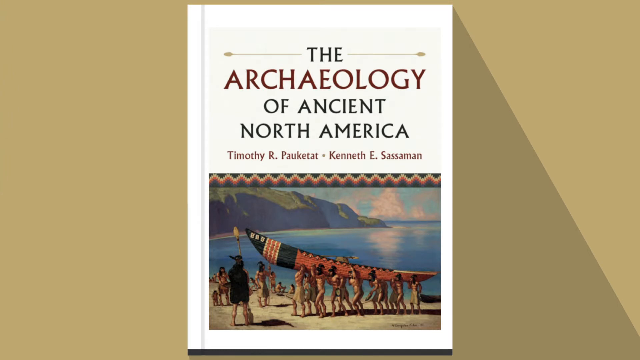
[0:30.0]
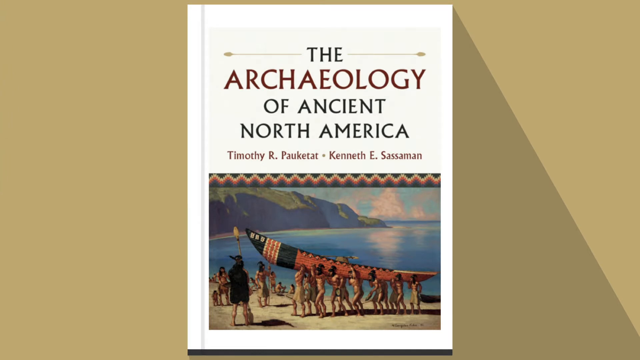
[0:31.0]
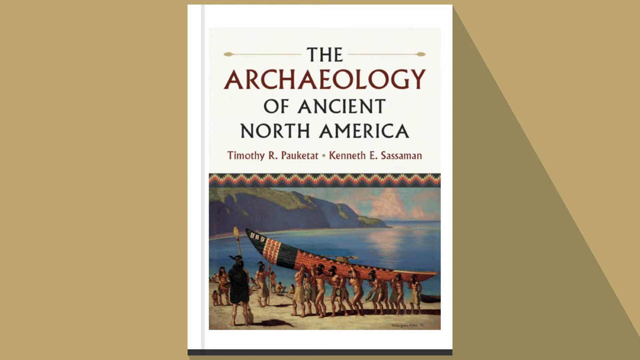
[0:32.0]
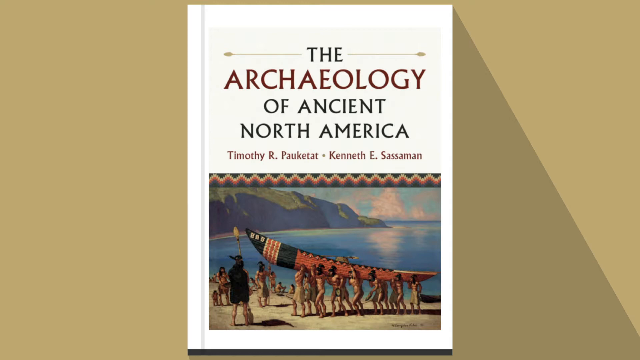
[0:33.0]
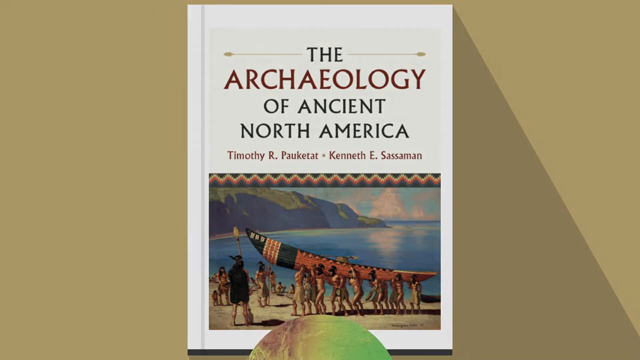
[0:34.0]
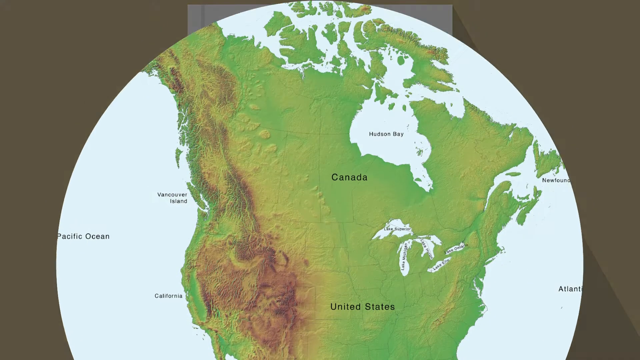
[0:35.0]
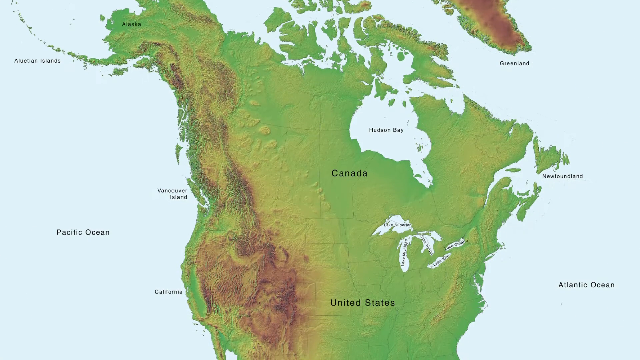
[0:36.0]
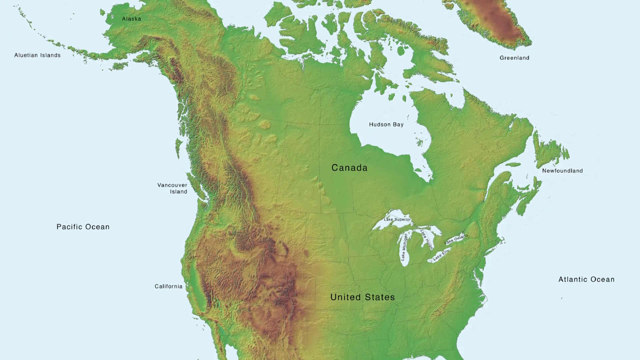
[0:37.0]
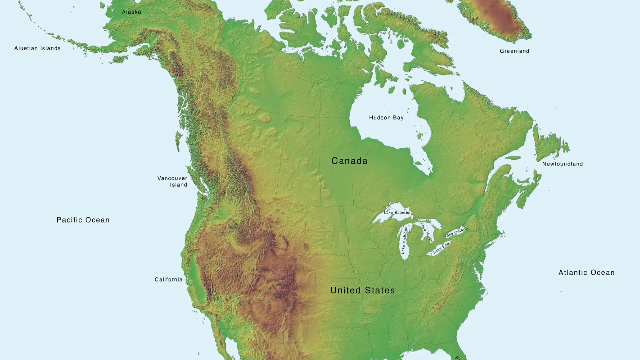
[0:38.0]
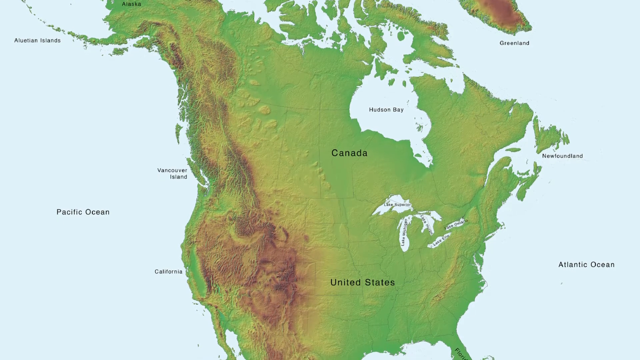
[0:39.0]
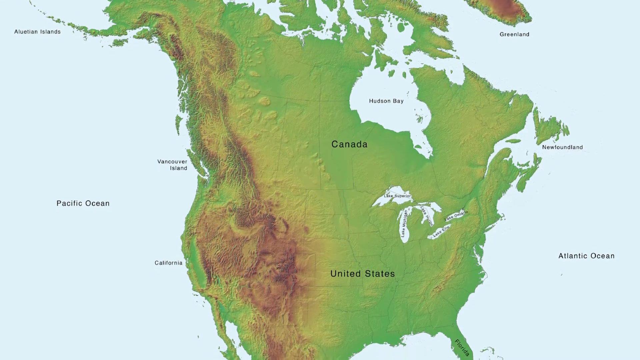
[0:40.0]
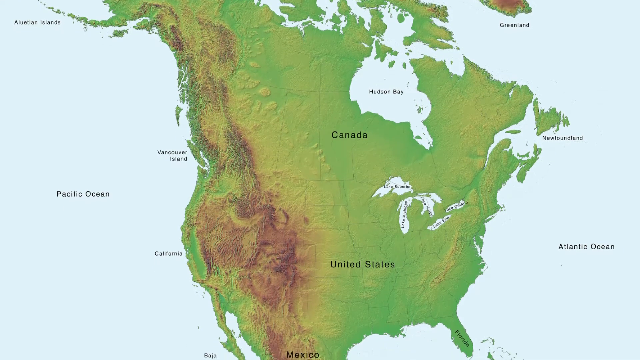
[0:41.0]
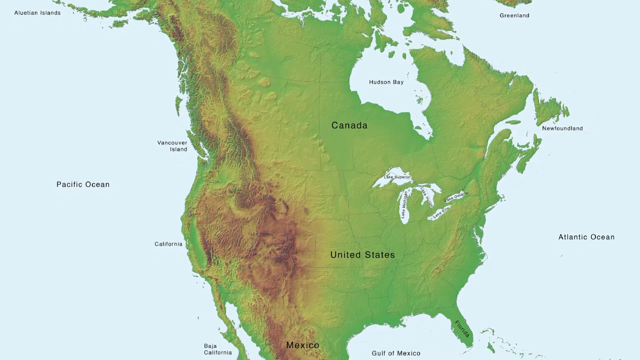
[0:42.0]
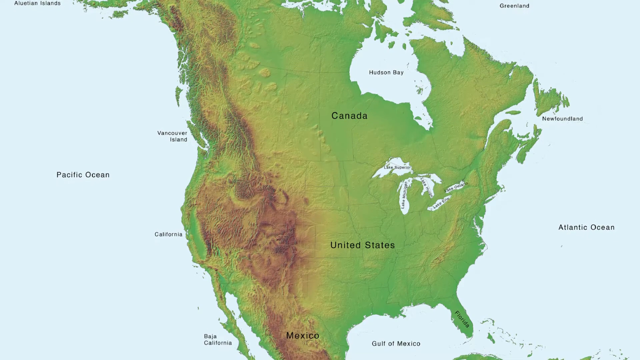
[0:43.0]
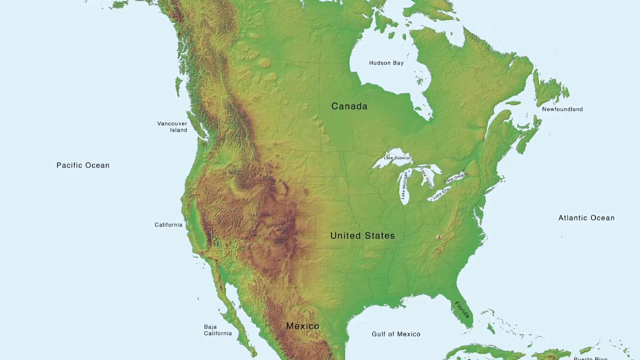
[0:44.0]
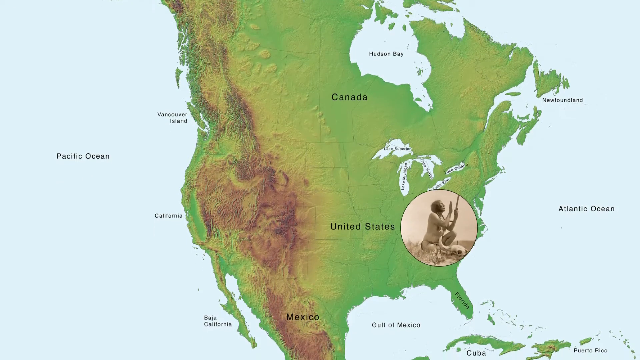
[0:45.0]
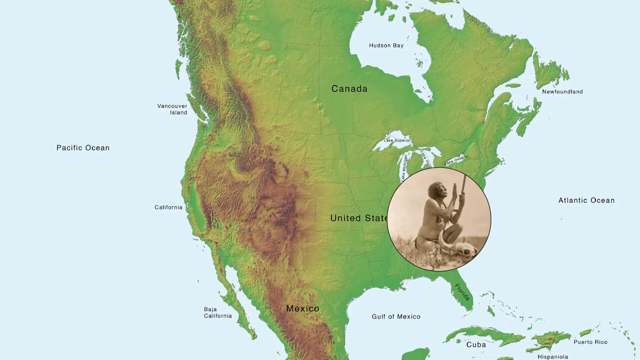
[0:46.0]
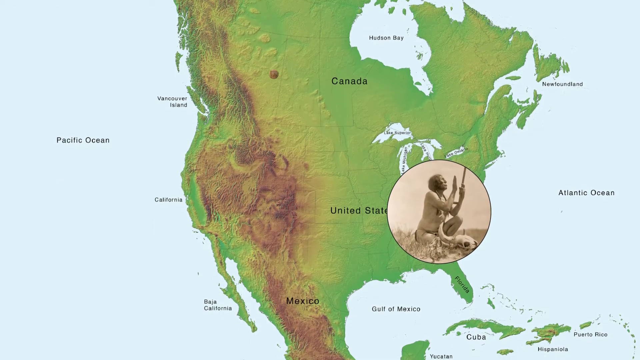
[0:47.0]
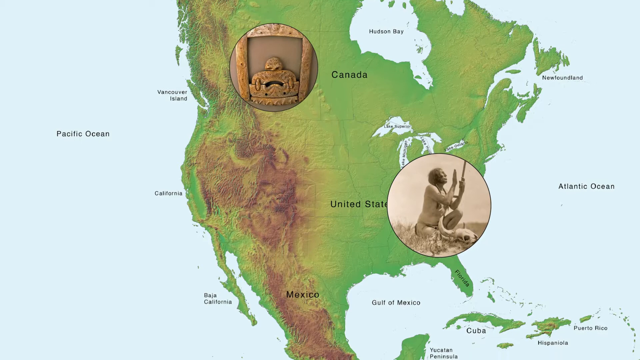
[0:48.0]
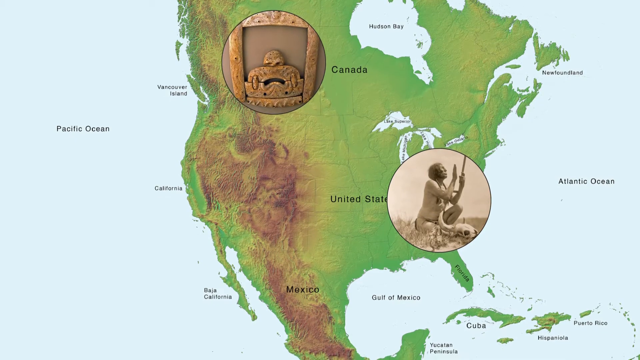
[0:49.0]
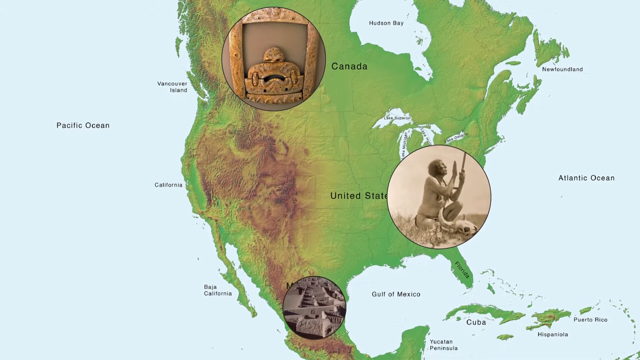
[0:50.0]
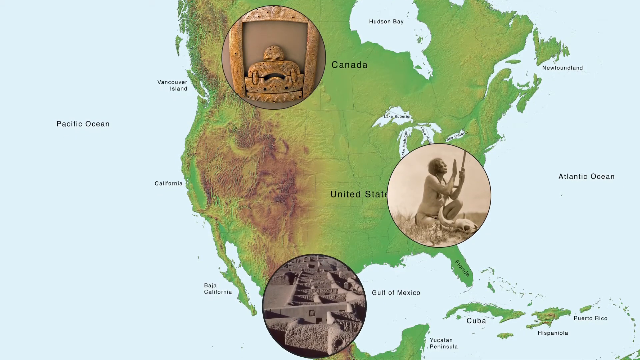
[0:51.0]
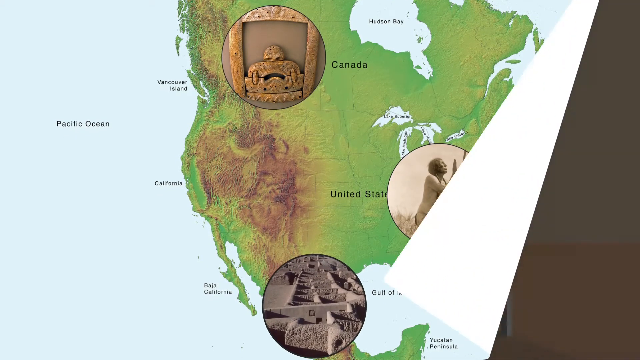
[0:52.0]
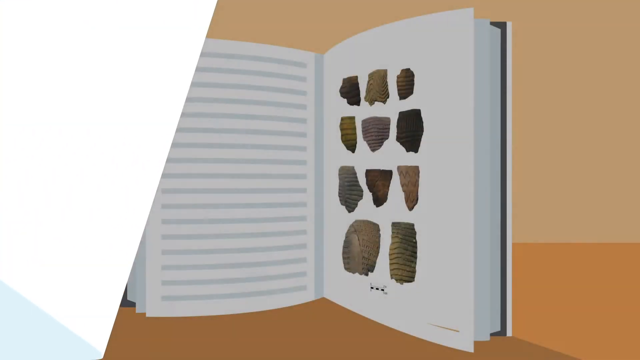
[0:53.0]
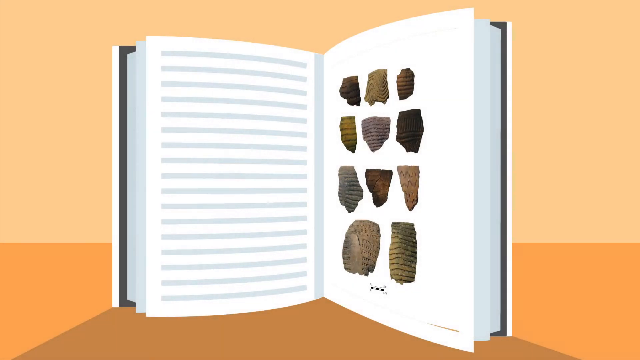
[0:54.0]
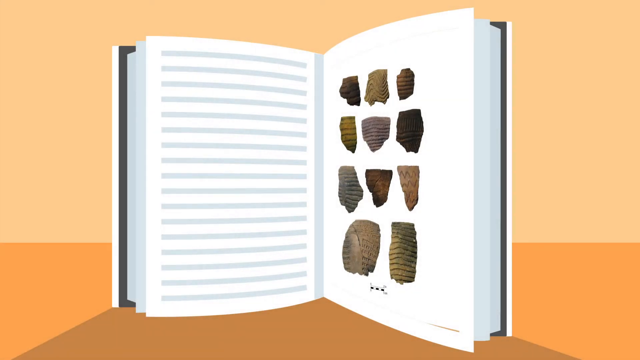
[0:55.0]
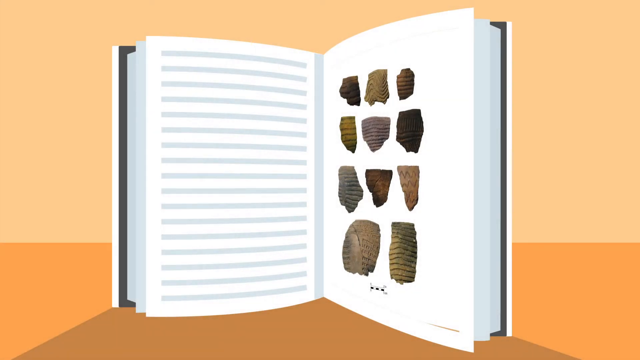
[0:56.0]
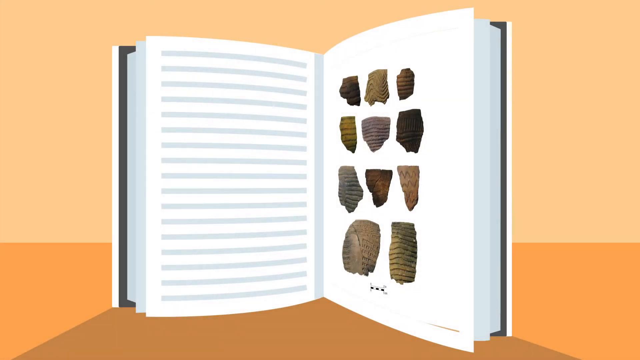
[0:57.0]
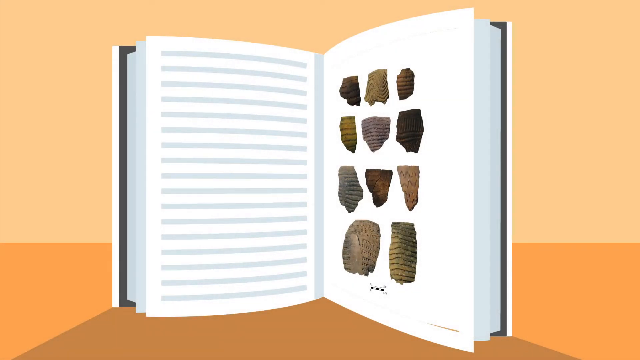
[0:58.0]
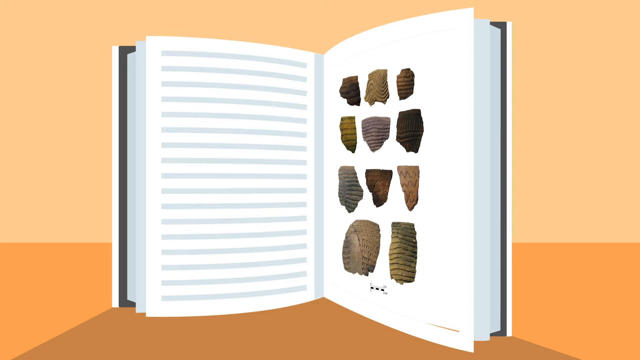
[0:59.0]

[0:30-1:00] The cover of a book by the same two authors, Timothy and Kenneth, appears, with the title The Archaeology of North America. The book has a white cover and is fairly large, roughly 11 inches tall and 9 inches wide. The title is at the top of the cover, and the bottom holds a painting of several Native Americans hoisting a canoe painted tan, red, white and blue and taking it from a lake or perhaps an ocean. Cliffs are visible in the far distance behind them, and a leader is silhouetted in the left part of the painting, holding a large spear that towers several feet over his head; he is seen mostly in silhouette because he is facing the workers. The scene is dotted with other people watching the proceedings. The video holds on the book's title, then changes with an exploding-circle transition to a map of North America. From top to bottom, Greenland, Hudson Bay and the United States are visible. On the left are Vancouver Island, California and the Pacific Ocean; the Aleutian Islands are in the upper left and the Atlantic Ocean in the lower right. Newfoundland appears just right of center and Hudson Bay slightly above center.